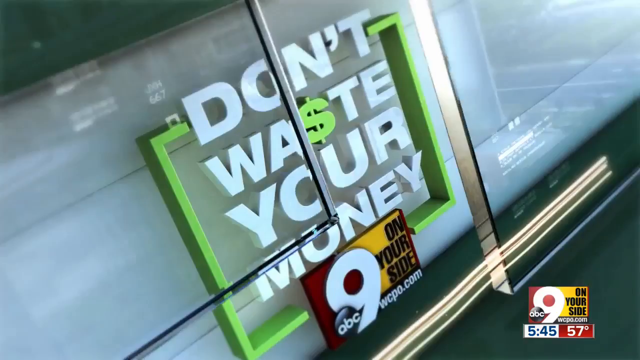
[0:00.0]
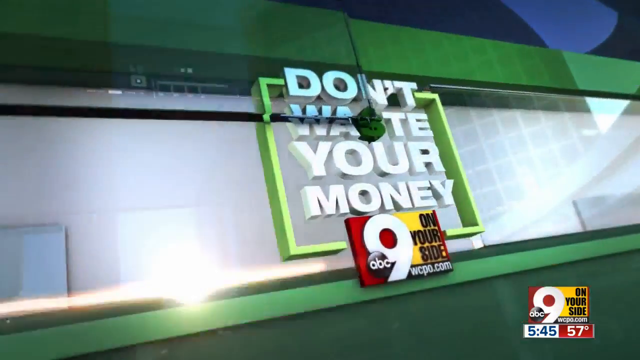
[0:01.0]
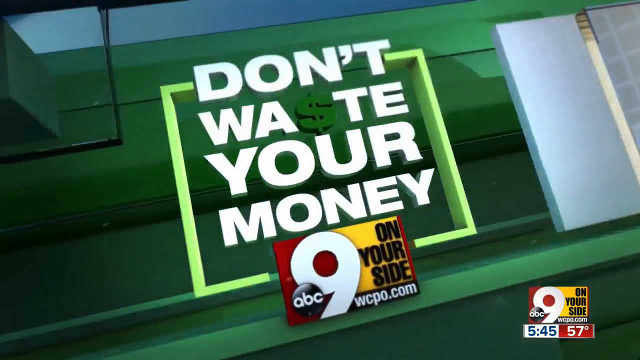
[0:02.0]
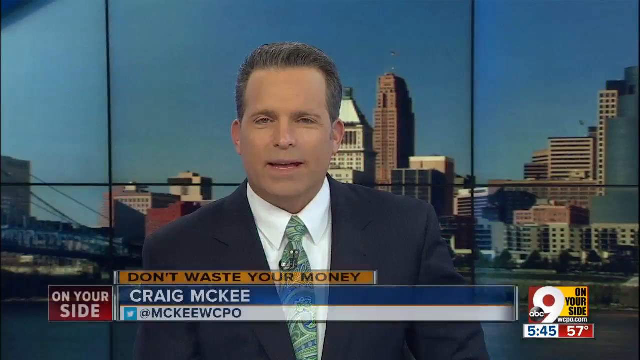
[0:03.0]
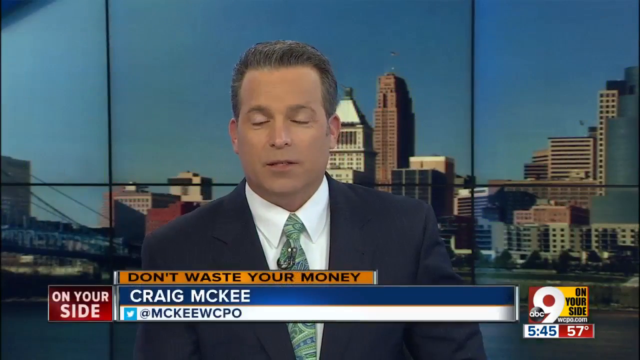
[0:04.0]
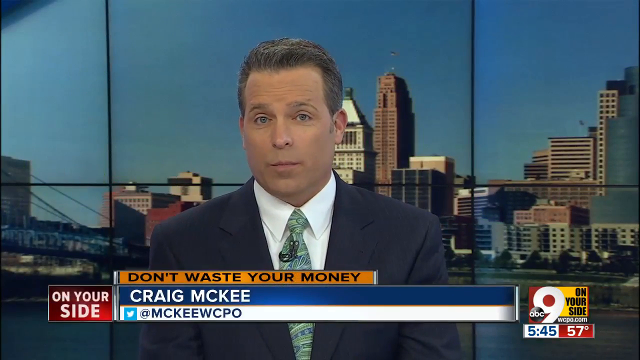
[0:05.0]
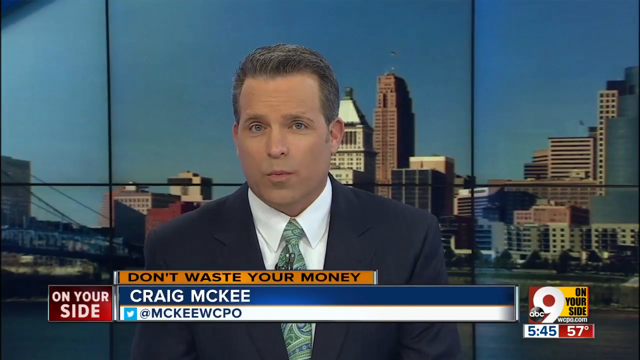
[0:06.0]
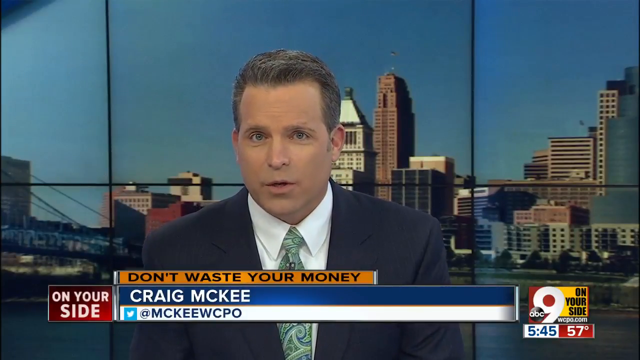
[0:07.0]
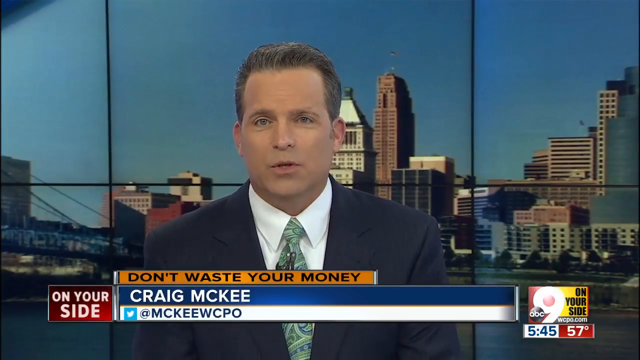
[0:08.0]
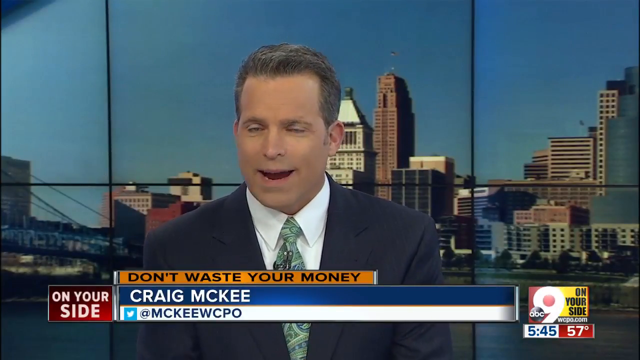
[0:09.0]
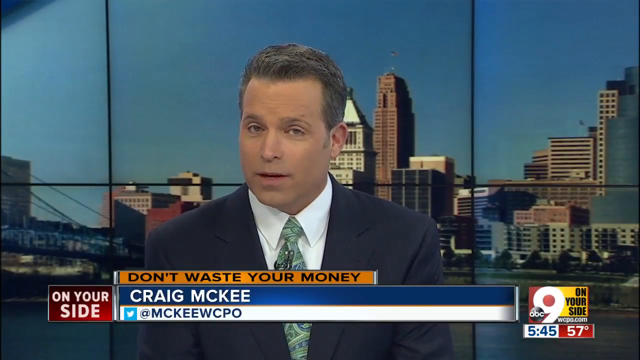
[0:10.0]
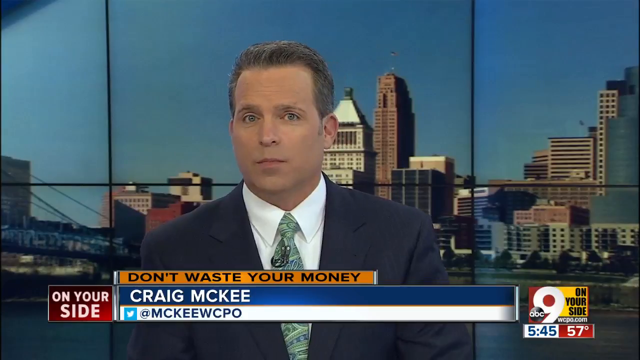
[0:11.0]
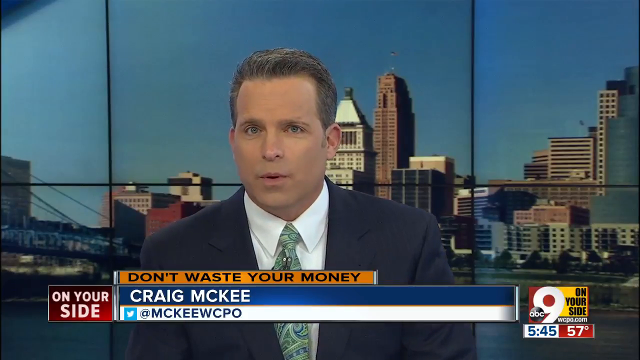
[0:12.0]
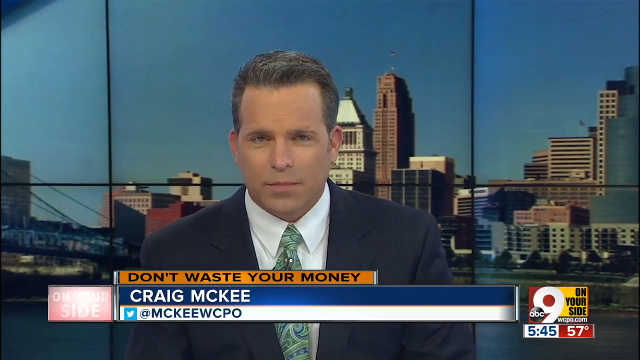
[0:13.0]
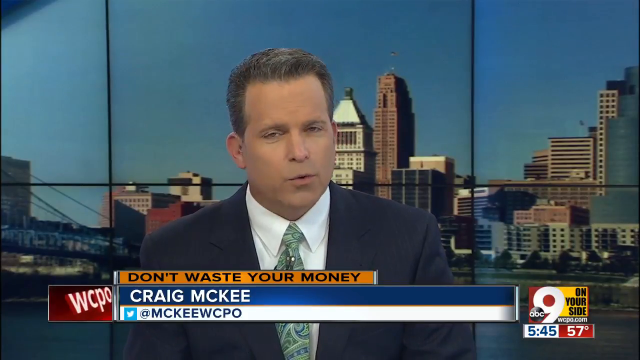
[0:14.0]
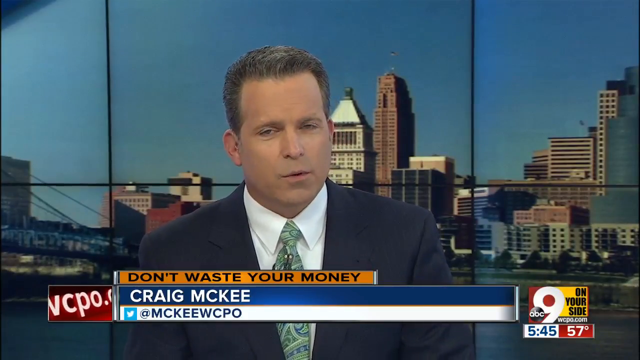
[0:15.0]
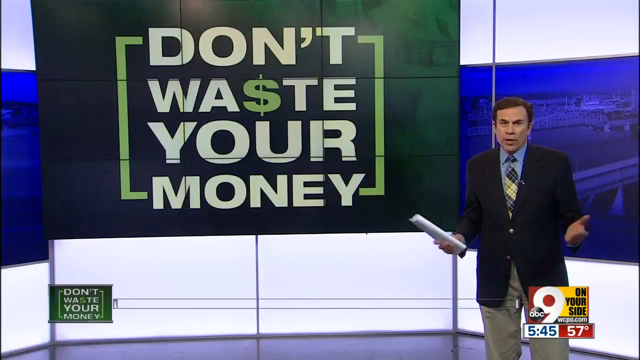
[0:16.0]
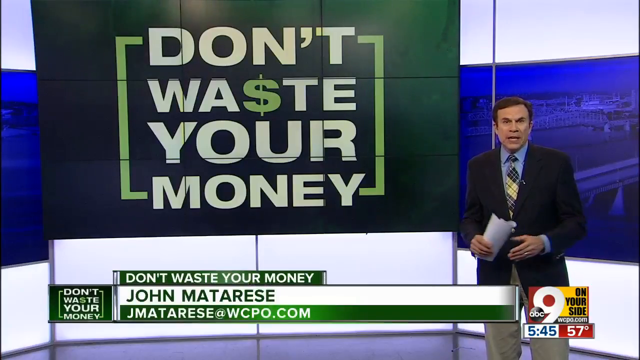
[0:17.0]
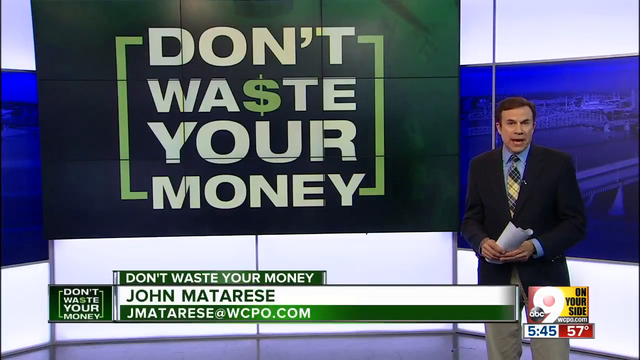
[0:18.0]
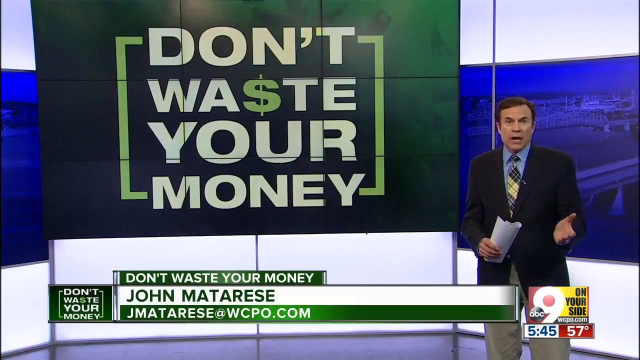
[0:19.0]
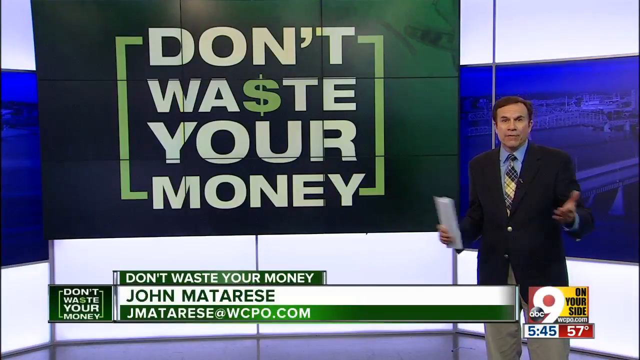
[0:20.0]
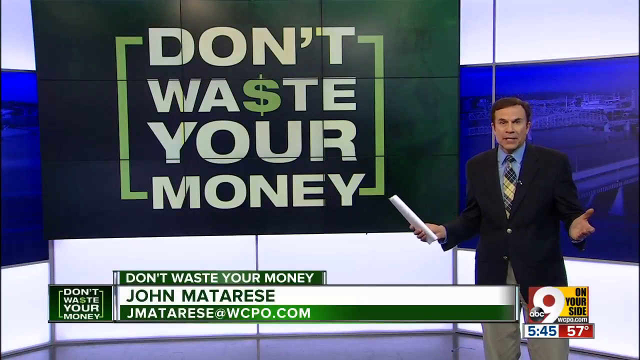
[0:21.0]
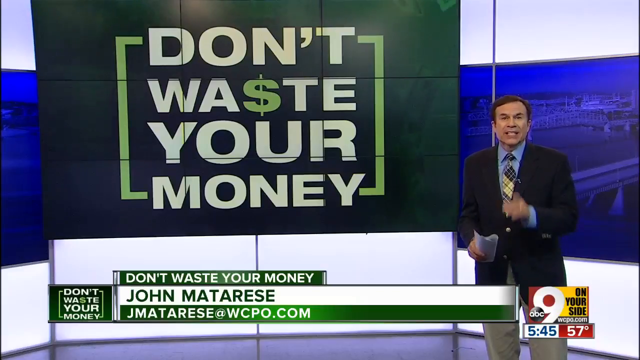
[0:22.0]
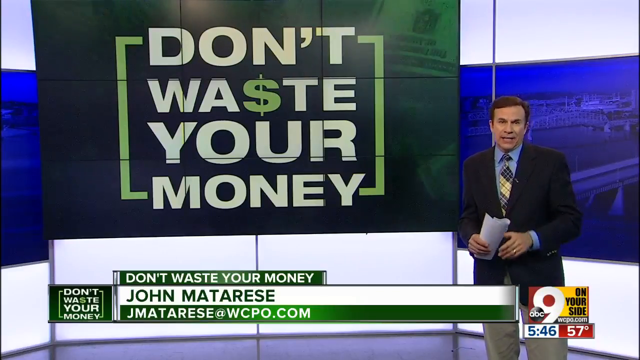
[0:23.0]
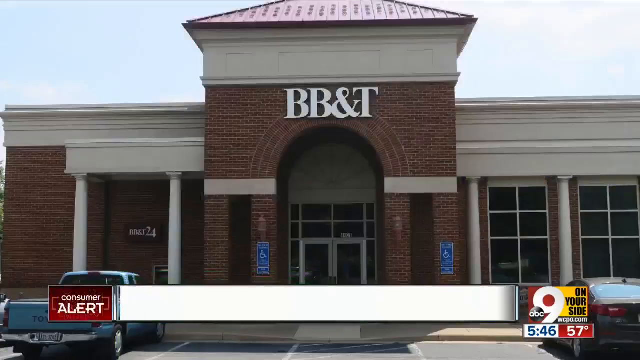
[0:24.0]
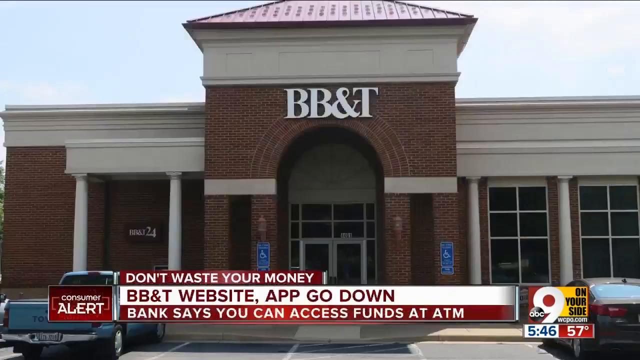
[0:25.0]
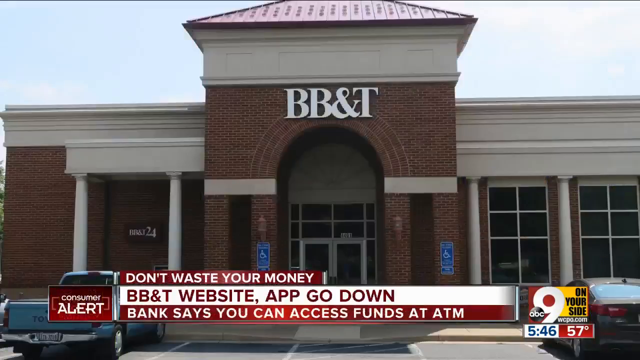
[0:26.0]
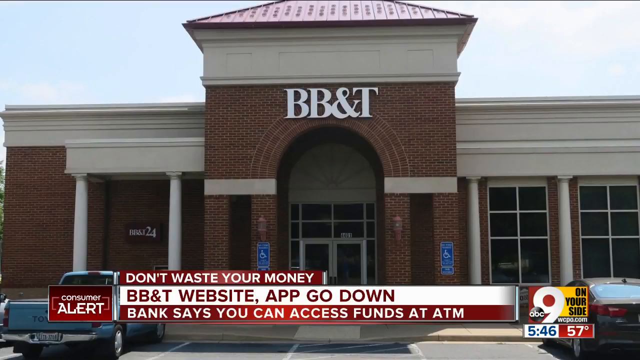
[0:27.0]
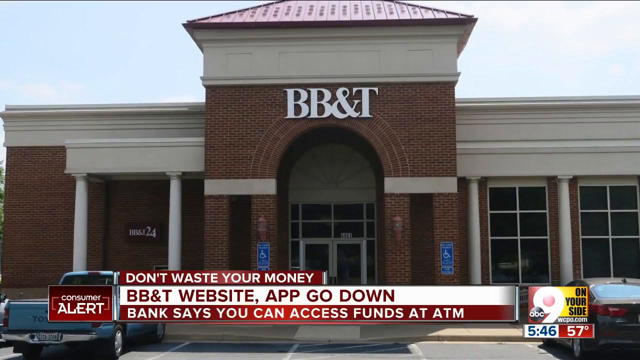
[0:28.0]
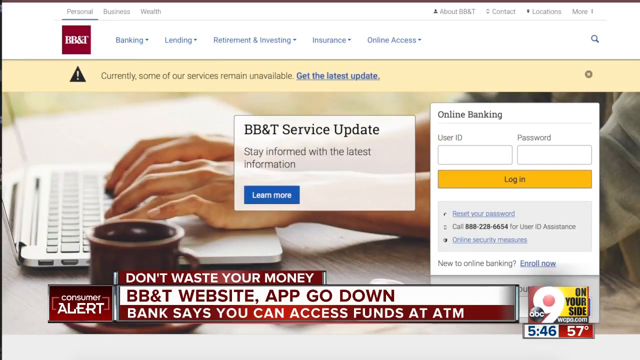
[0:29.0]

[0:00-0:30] A newscast opens on a segment called Don't Waste Your Money on Channel Nine News. The newscaster is Craig McKee, and his Twitter handle is McKeeWCPO. He looks very clean cut, wearing a suit, a tie, and a collared button-up shirt. The broadcast cuts to another reporter, John Mattarese, and then shows a building labeled BB&T. The report indicates that the BB&T website and app are down and that the bank says funds can be accessed at the ATM instead. Text on the BB&T website says it is doing a service update.